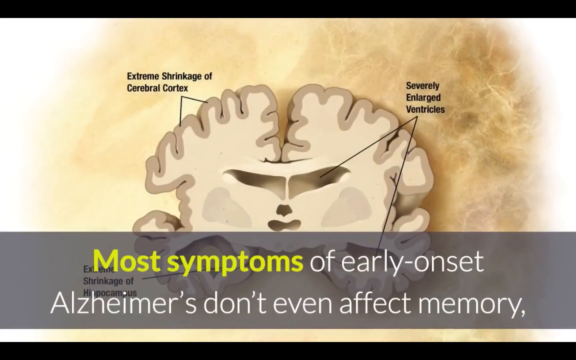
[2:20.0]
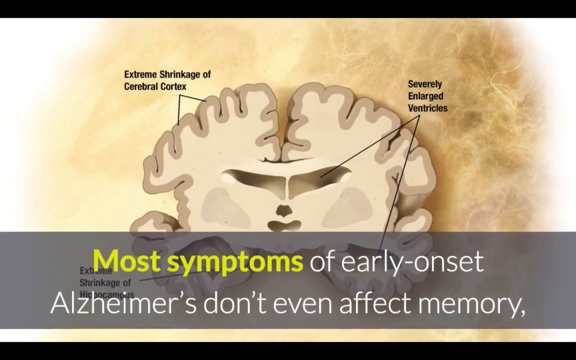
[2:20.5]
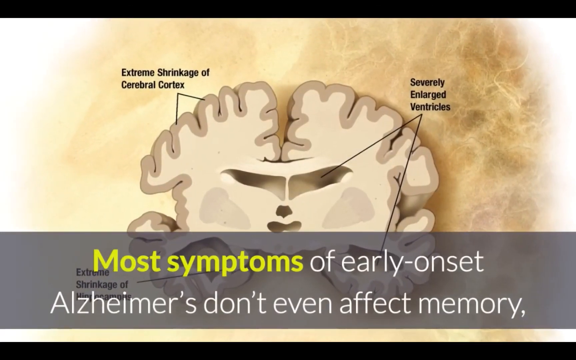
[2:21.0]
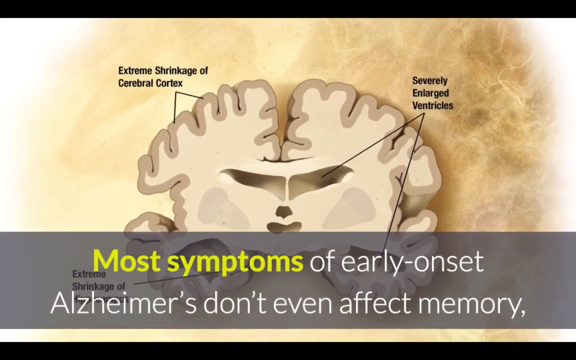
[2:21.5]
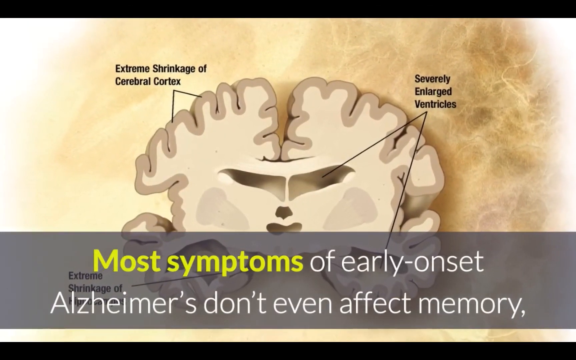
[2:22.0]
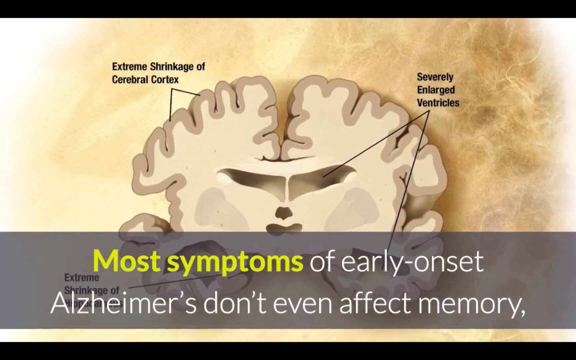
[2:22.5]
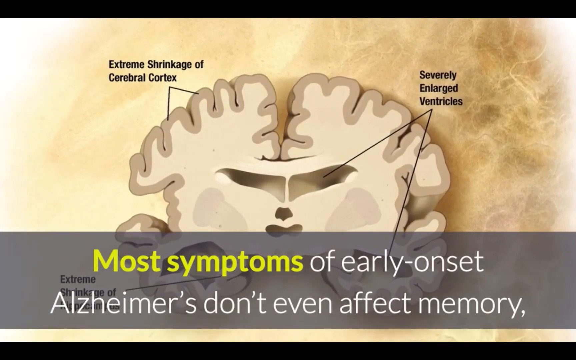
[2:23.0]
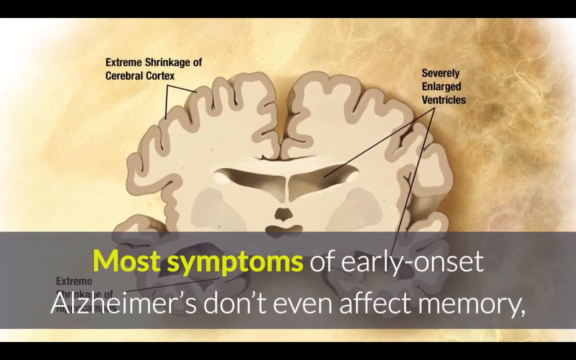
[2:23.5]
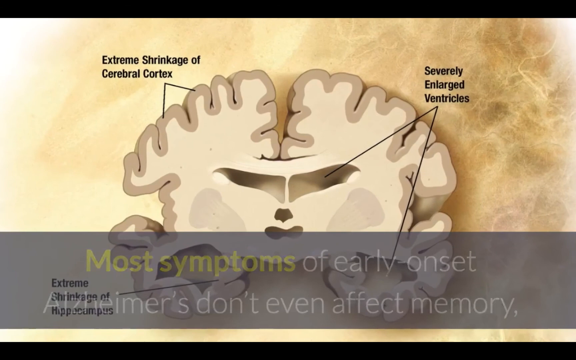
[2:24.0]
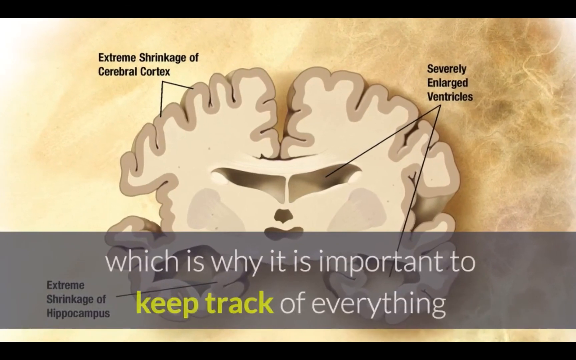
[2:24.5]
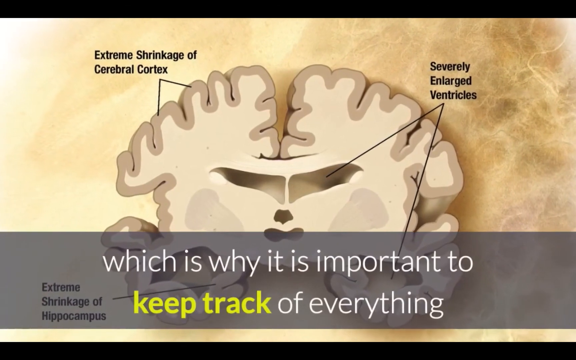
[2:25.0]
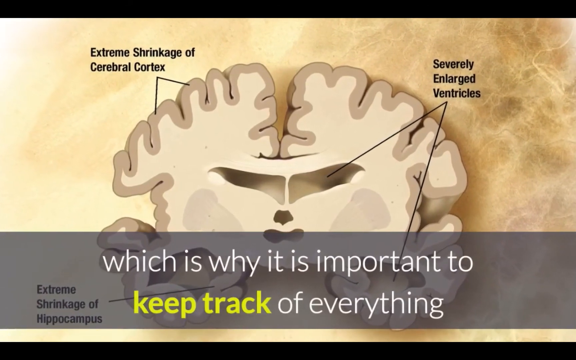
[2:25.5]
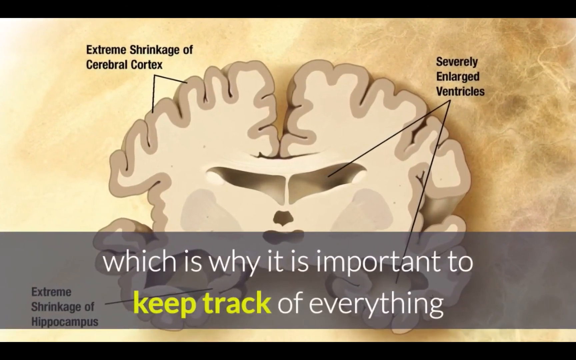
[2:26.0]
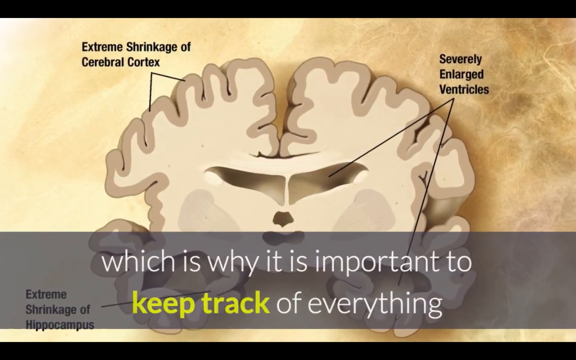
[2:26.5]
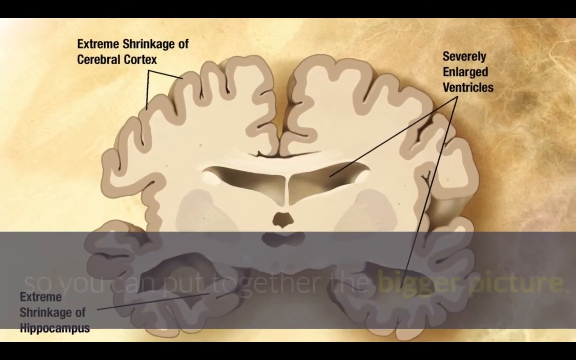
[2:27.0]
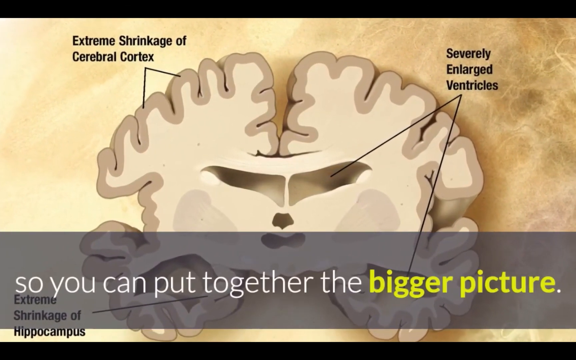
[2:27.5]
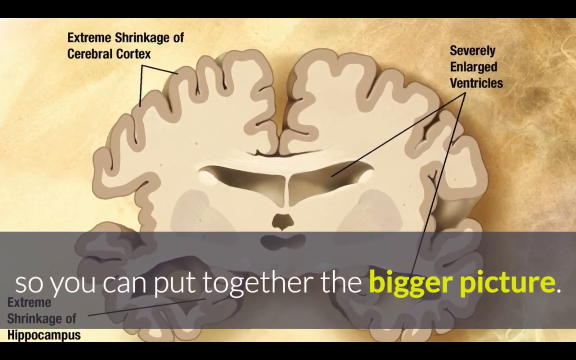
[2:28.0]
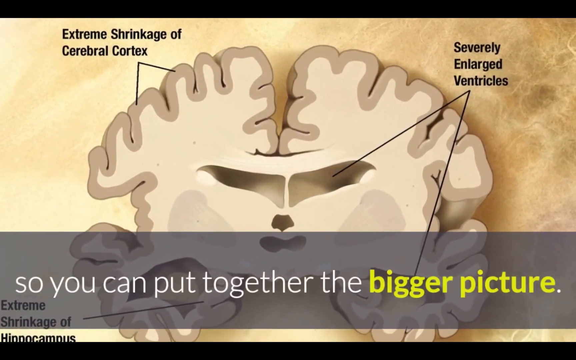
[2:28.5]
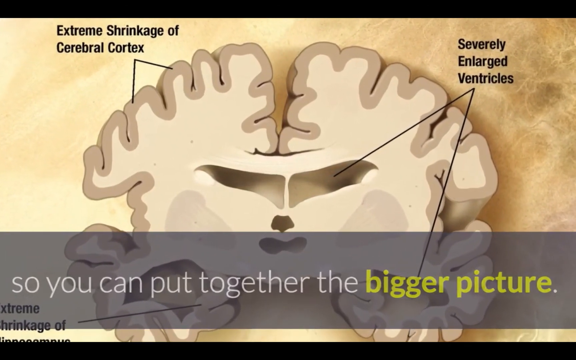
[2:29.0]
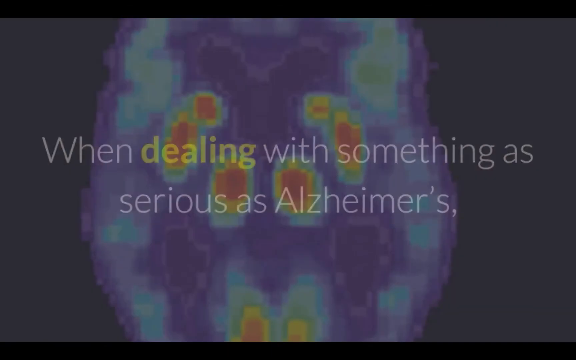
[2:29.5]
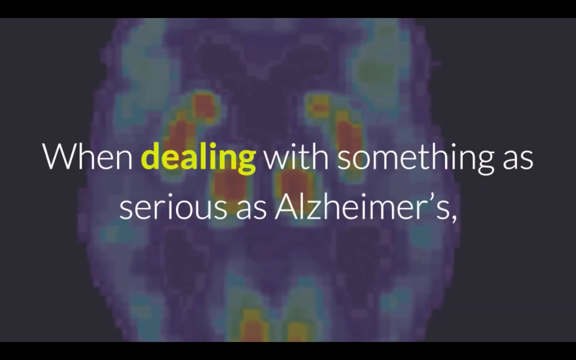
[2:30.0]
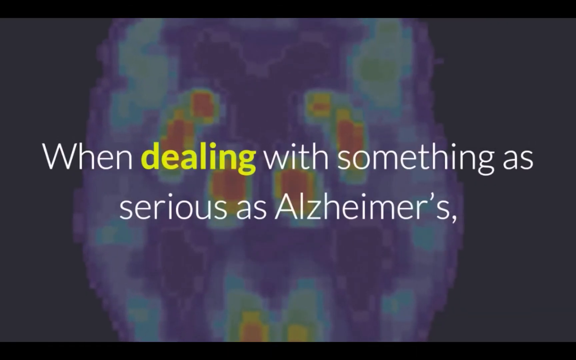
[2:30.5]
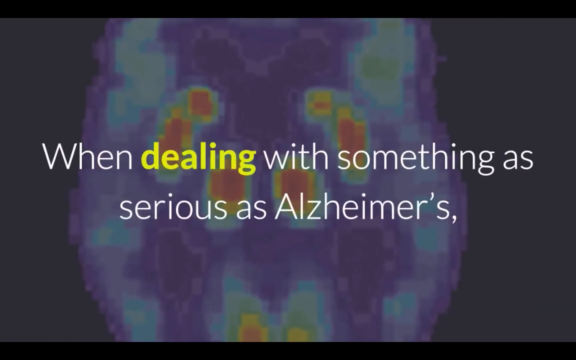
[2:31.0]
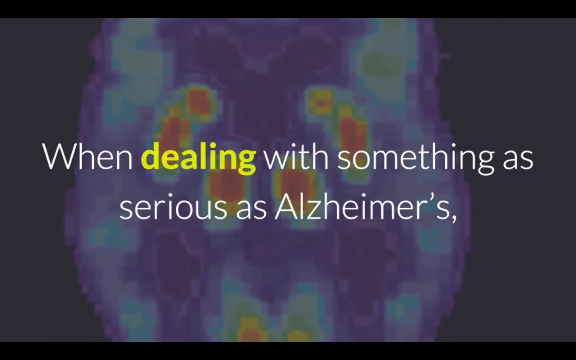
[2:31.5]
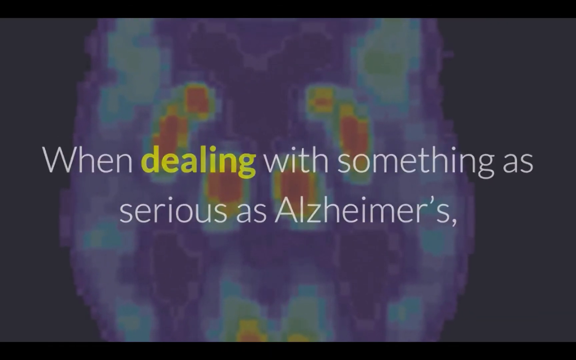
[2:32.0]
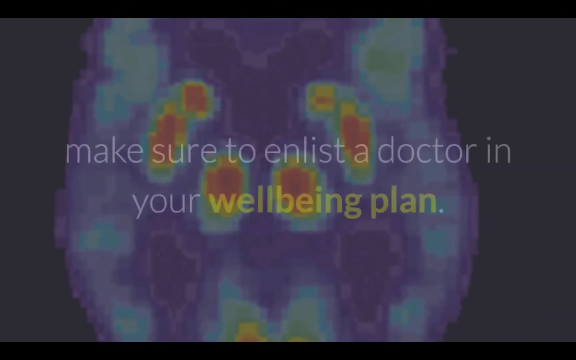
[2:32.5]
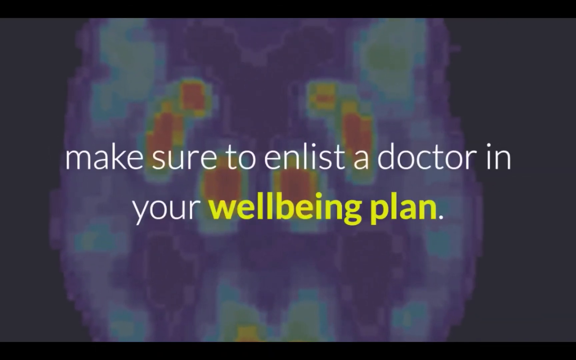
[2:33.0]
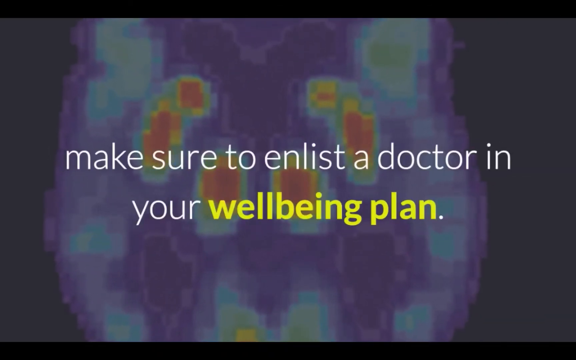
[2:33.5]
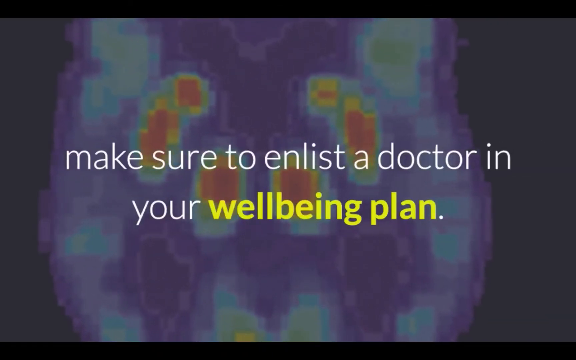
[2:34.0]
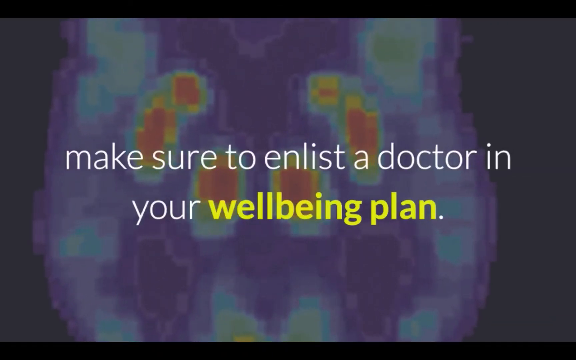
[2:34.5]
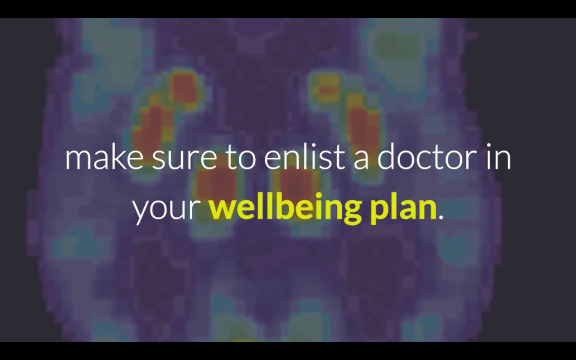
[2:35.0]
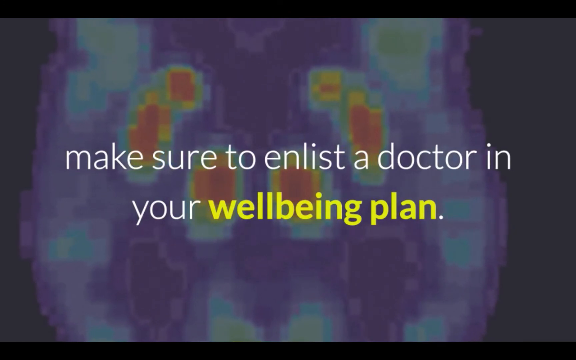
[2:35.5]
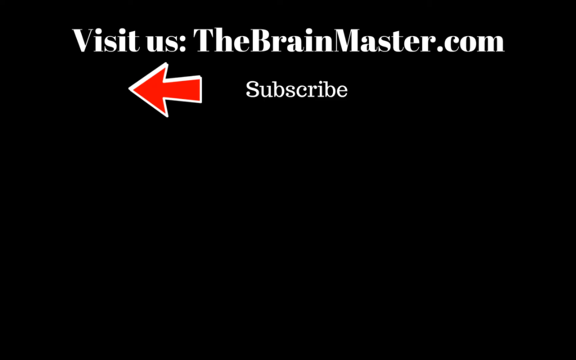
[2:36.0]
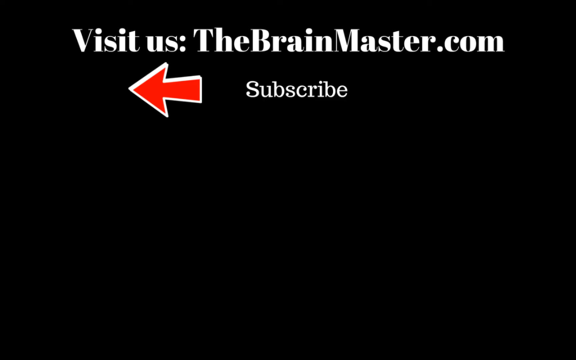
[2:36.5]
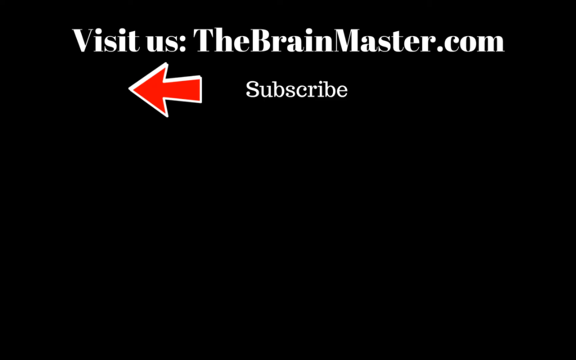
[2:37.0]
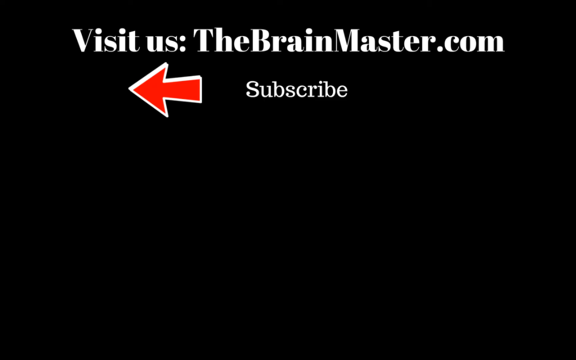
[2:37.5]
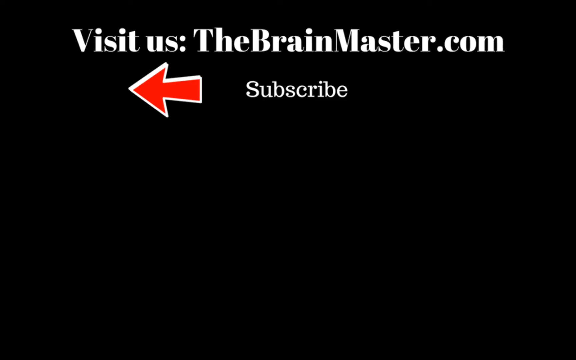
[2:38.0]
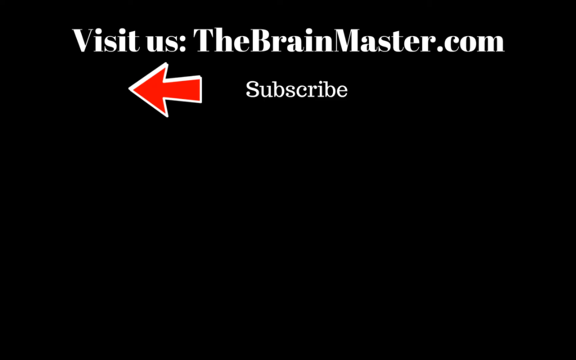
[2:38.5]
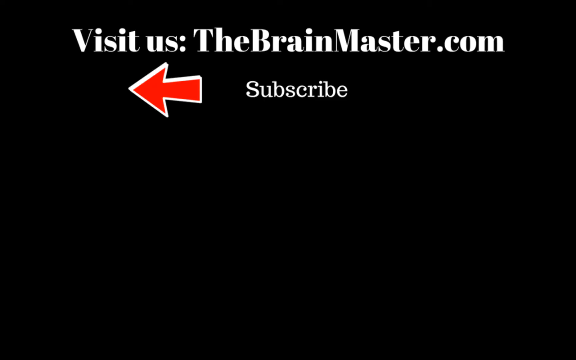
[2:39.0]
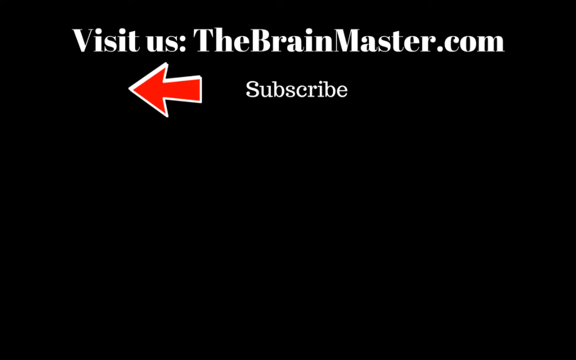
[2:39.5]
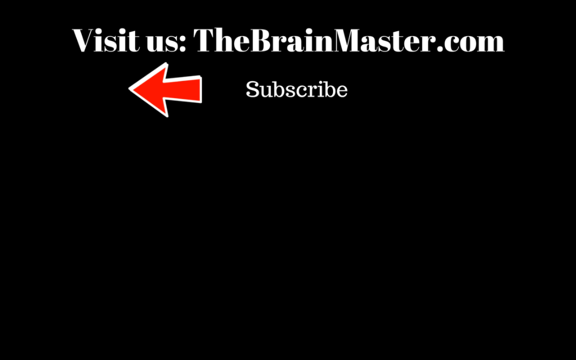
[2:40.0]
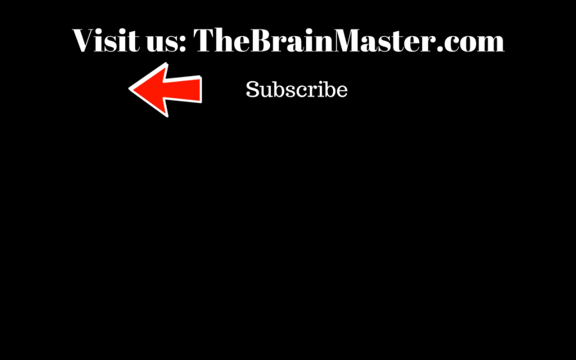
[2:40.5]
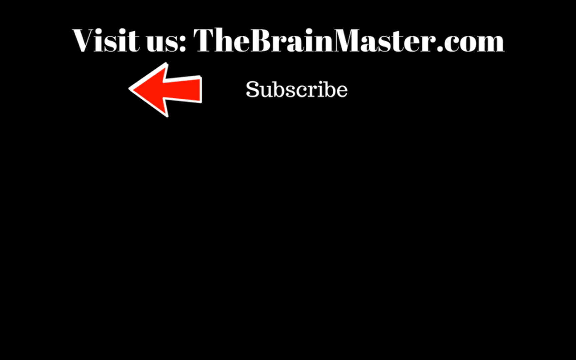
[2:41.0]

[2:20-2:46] A brain is shown with arrows on it, with text reading "most symptoms of early onset of alzheimer's don't affect the memory" and "which is why it's important to keep track of everything so you can put together the bigger." The scene changes to a very colorful image that is hard to describe, with words reading "when dealing with something as serious as" and "Make sure to enlist a doctor." A black page has white text reading "visit us thebrainmaster.com," with an arrow facing left and small words reading "subscribe." A message says you can get help on their website.